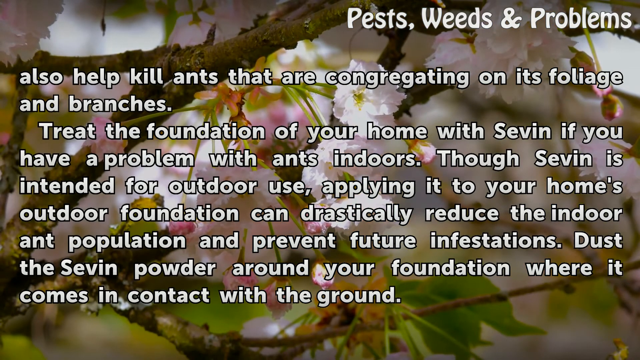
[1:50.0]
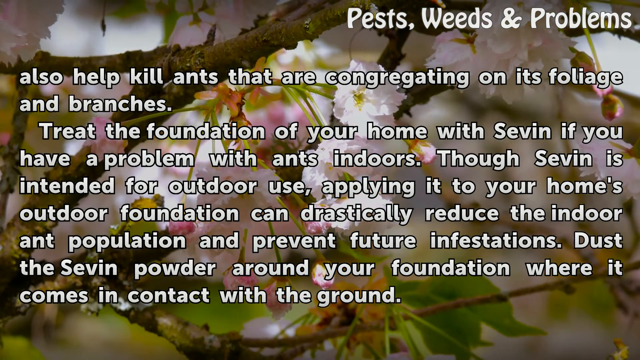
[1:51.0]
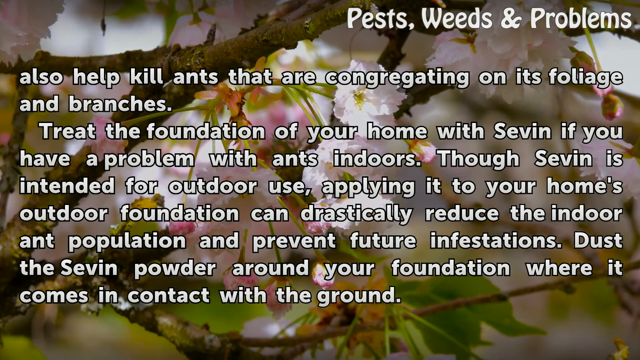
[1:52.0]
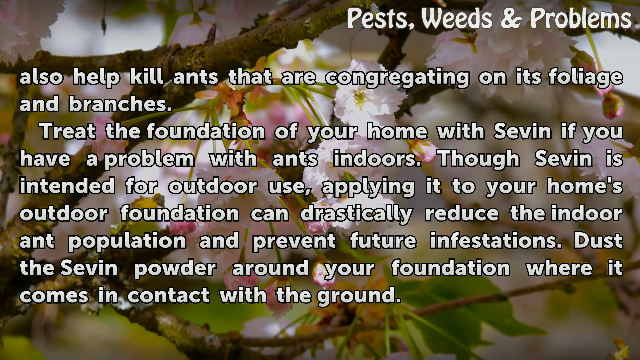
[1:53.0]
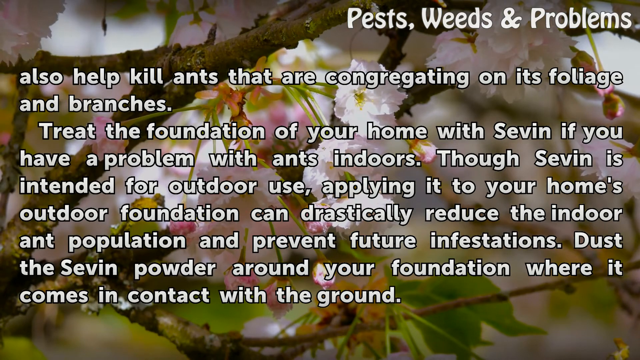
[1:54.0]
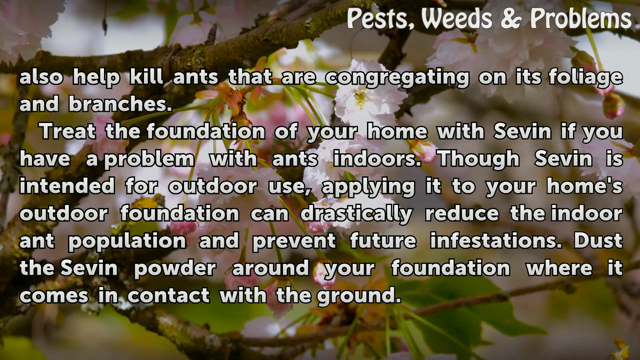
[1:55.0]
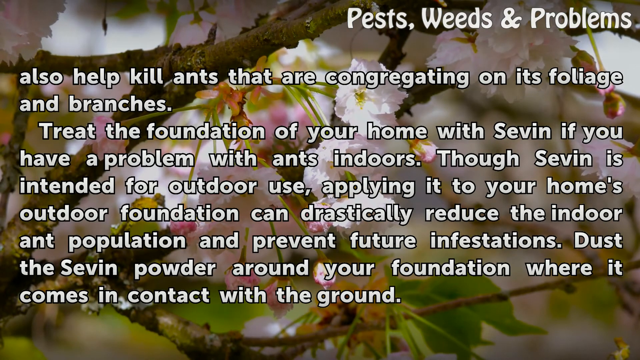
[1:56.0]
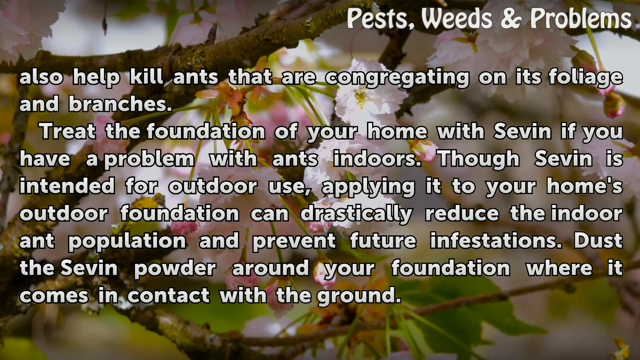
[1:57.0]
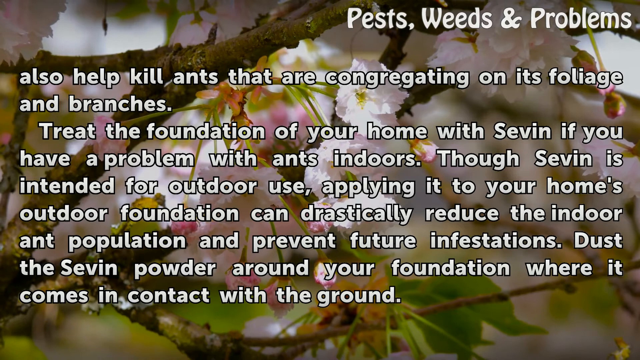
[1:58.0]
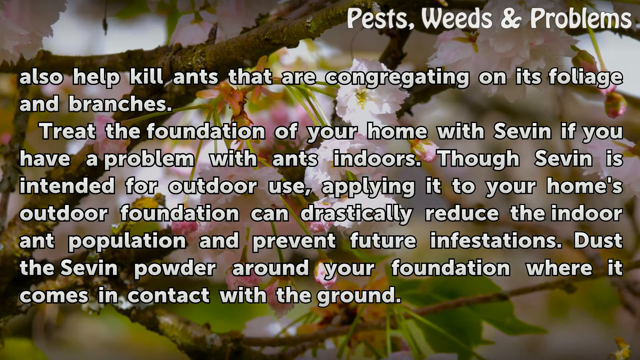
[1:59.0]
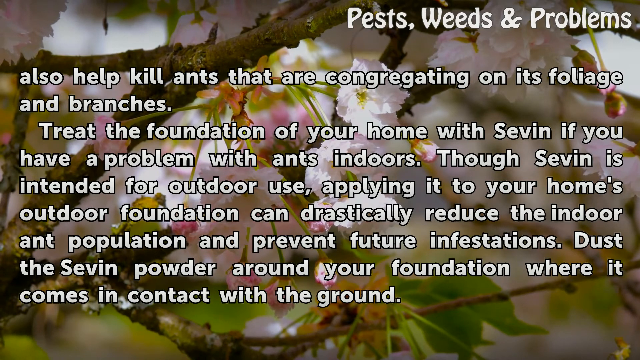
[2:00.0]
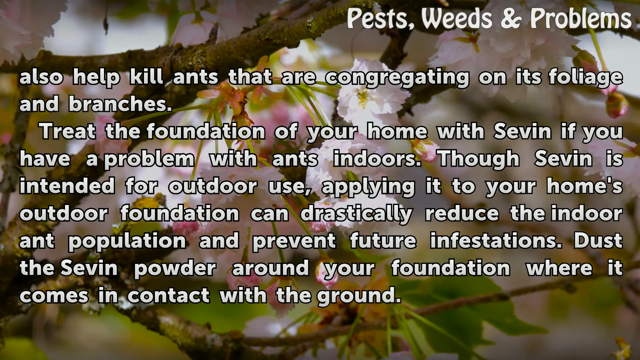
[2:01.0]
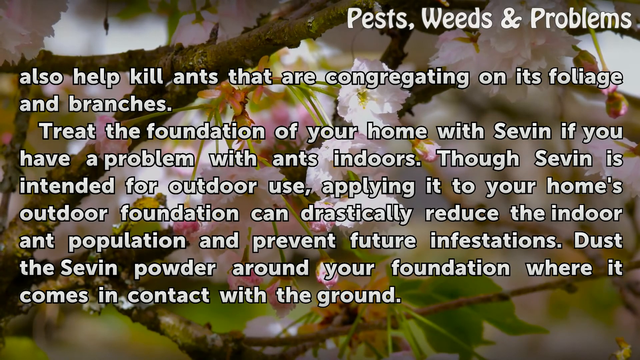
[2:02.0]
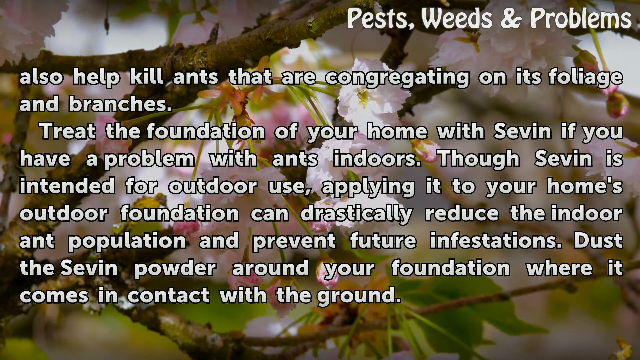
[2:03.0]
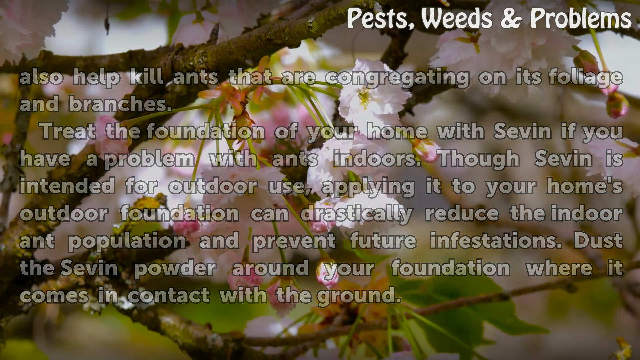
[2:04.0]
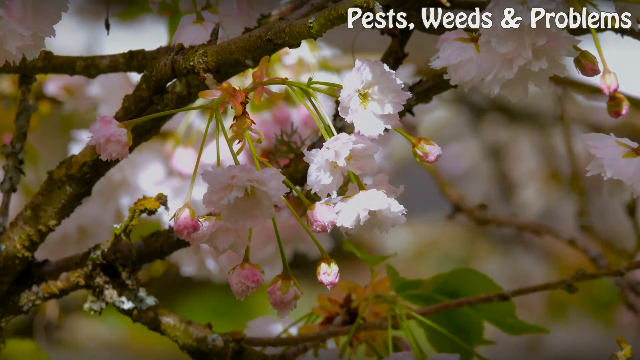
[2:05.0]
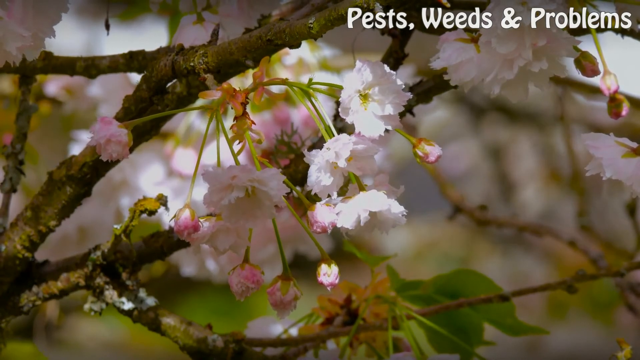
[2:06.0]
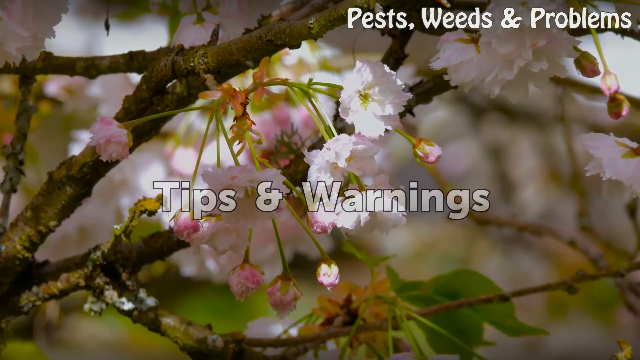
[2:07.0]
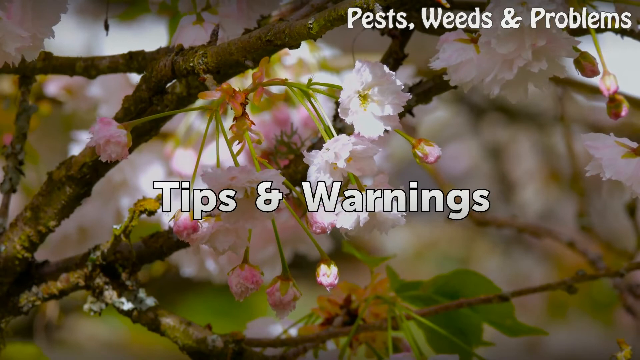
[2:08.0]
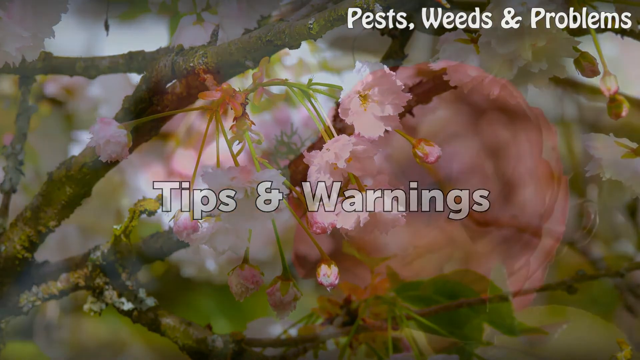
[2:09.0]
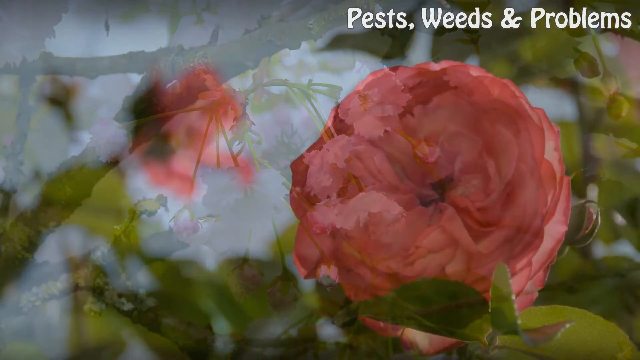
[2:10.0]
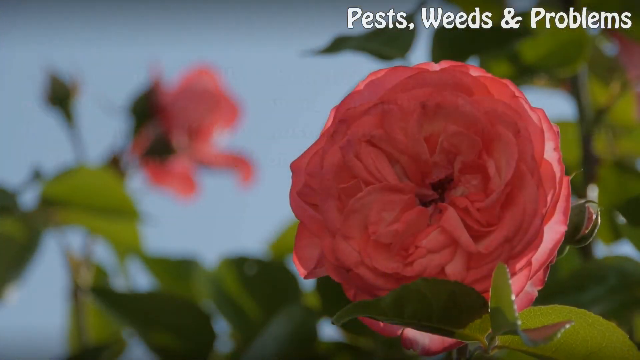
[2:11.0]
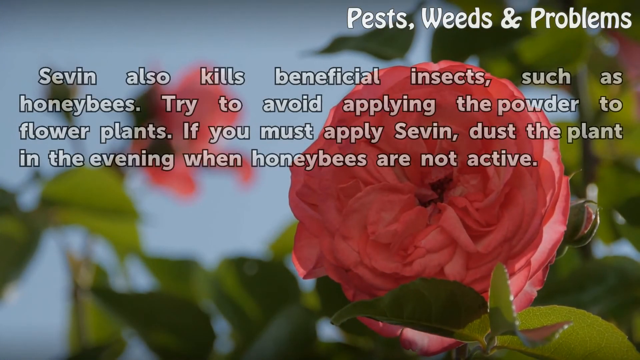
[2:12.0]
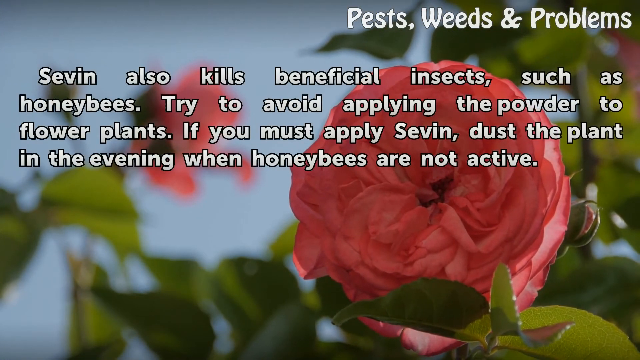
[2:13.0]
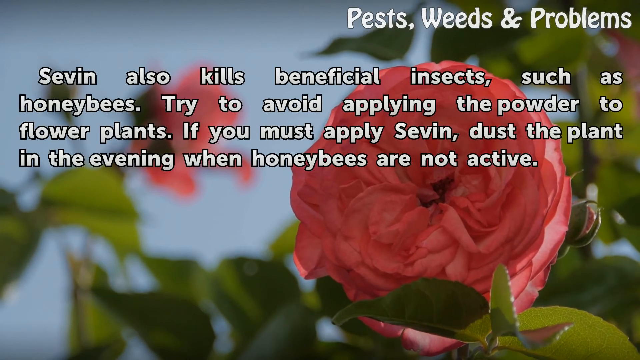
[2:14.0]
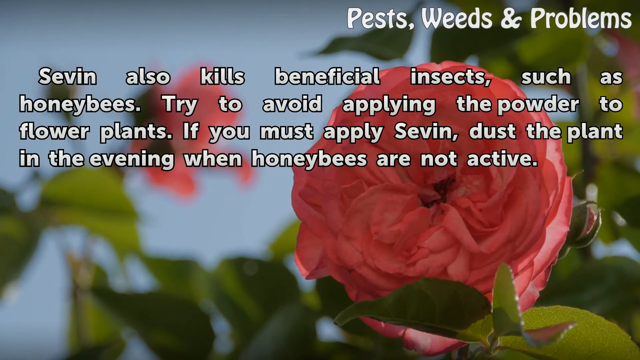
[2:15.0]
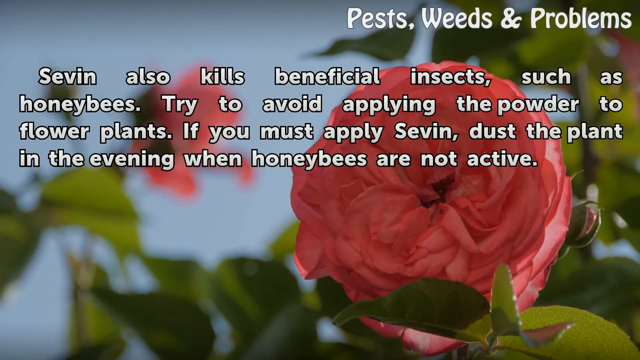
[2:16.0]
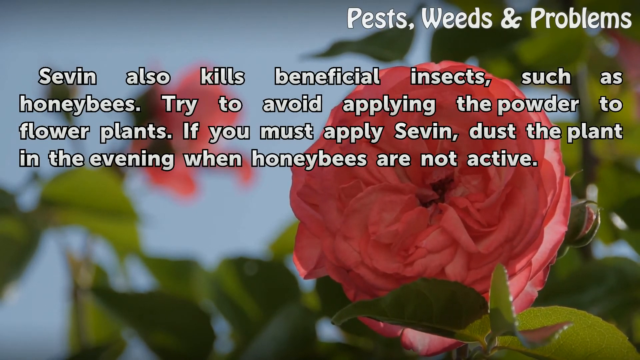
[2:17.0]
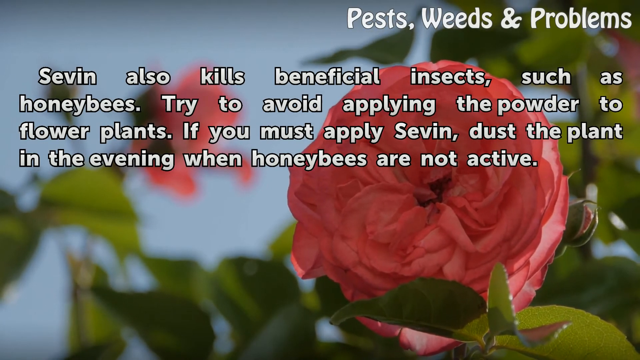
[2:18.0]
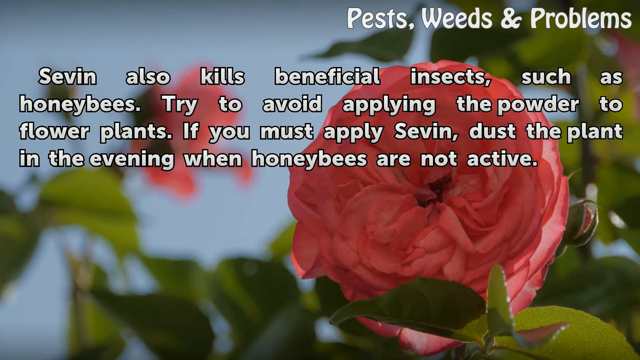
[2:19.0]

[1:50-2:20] Partway through, the scene changes and a new message reads "tips and warnings". In the background is a new flower, animated and moving slightly. The text reads: "SEVIN also kills beneficial insects such as honeybees. Try to avoid applying the powder to flower plants if you must apply SEVIN. Dust the plant in the evening when honeybees are not active."